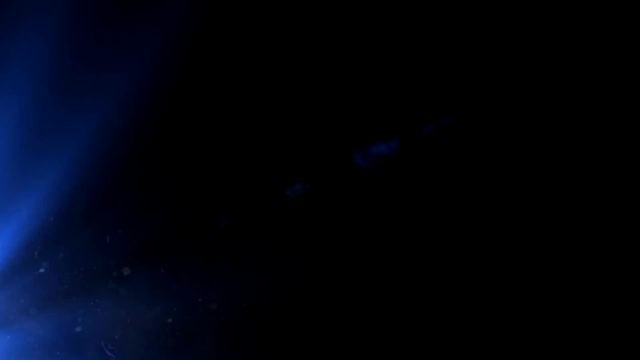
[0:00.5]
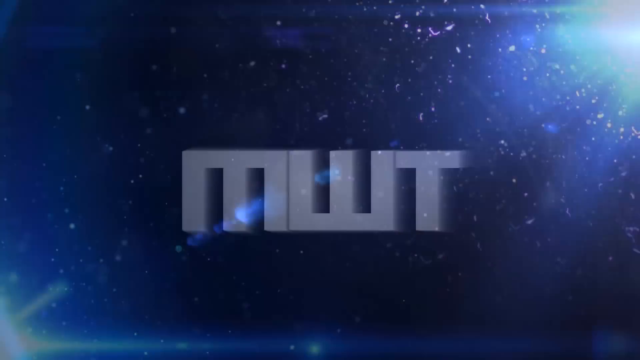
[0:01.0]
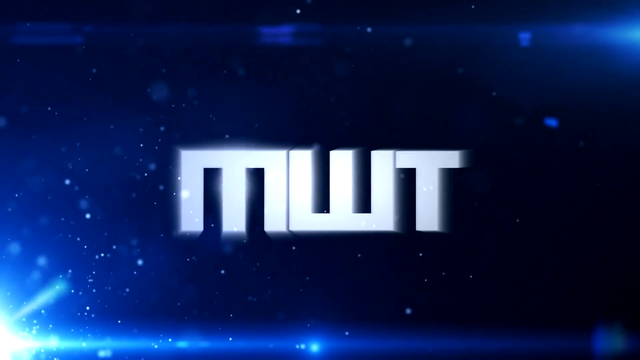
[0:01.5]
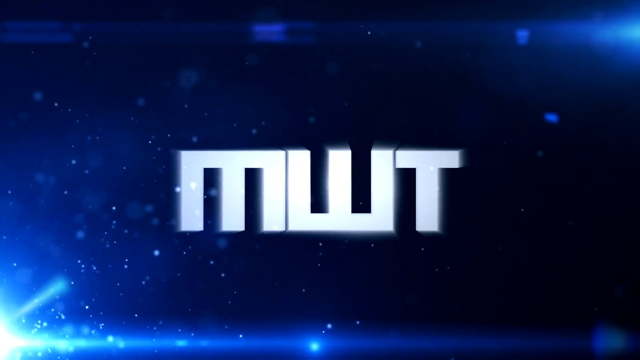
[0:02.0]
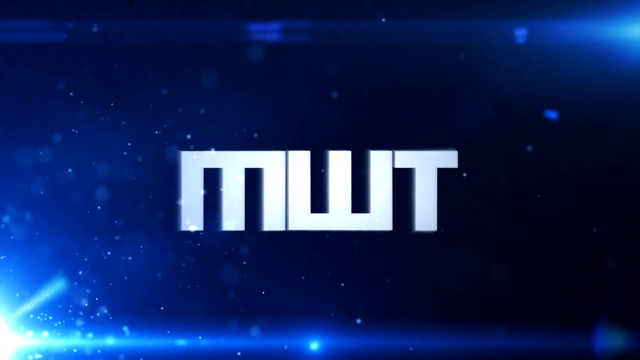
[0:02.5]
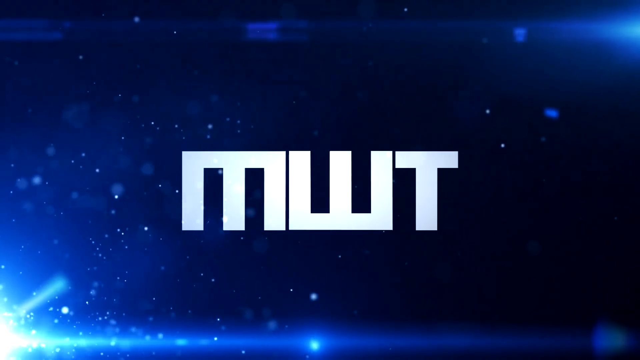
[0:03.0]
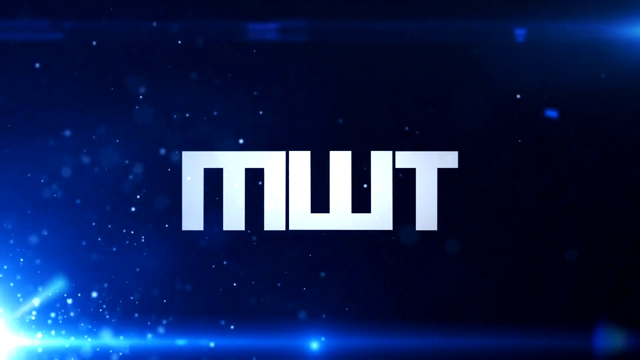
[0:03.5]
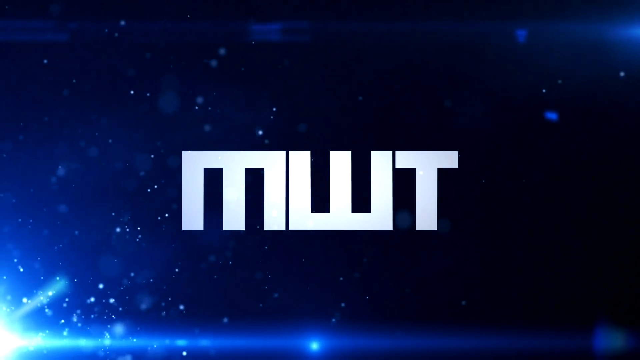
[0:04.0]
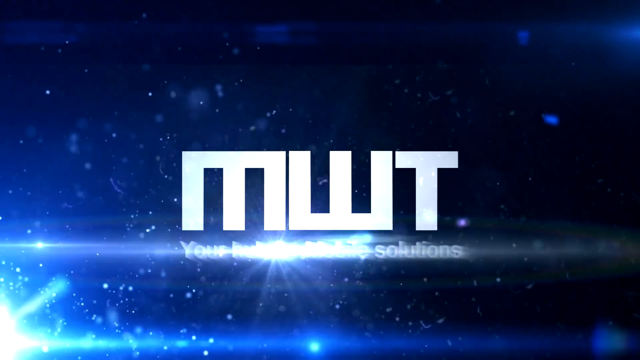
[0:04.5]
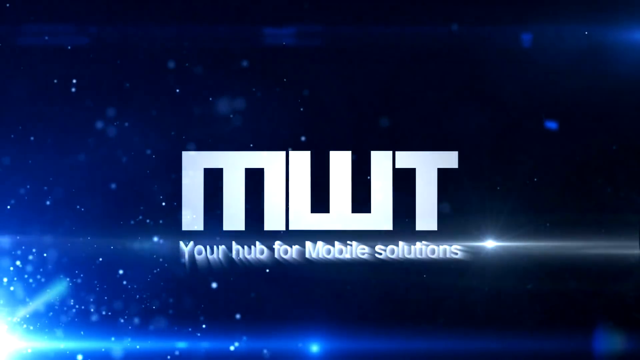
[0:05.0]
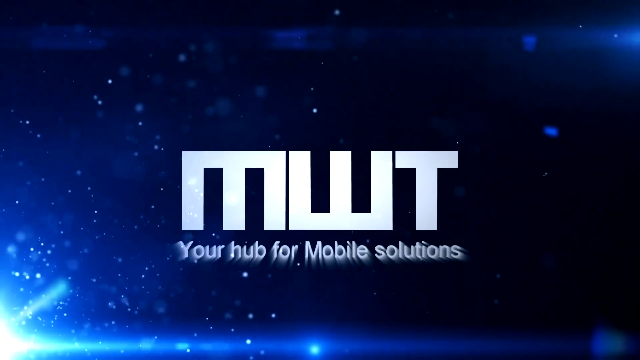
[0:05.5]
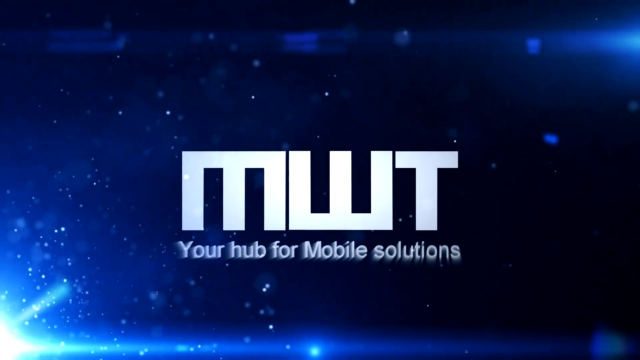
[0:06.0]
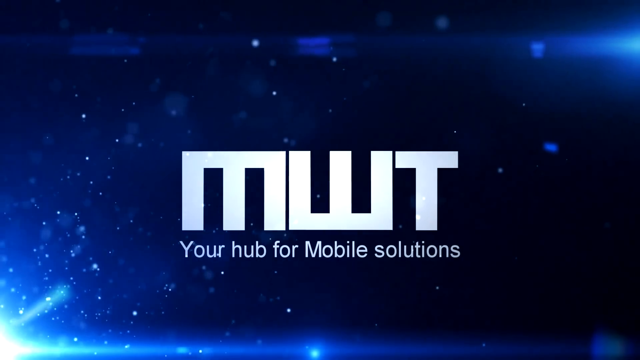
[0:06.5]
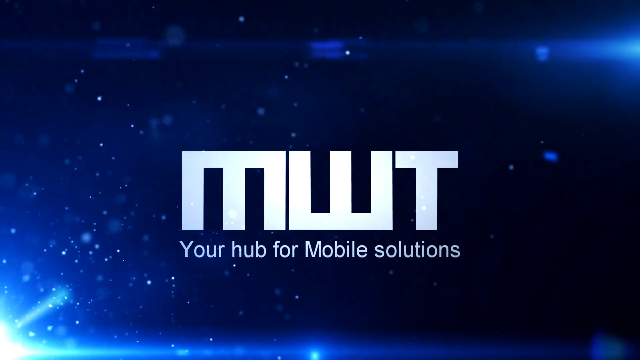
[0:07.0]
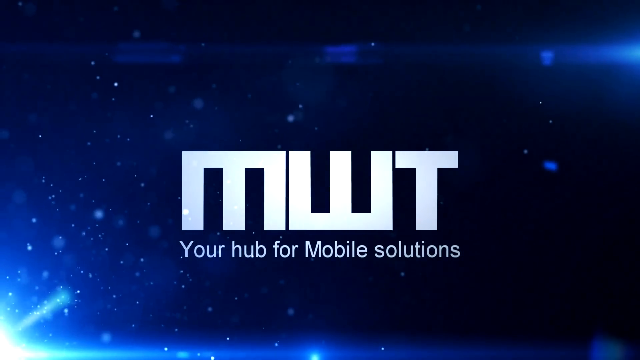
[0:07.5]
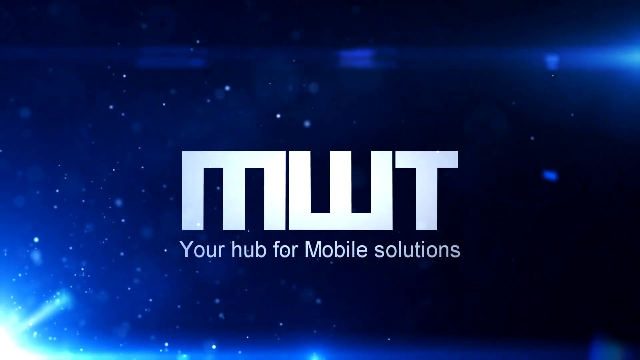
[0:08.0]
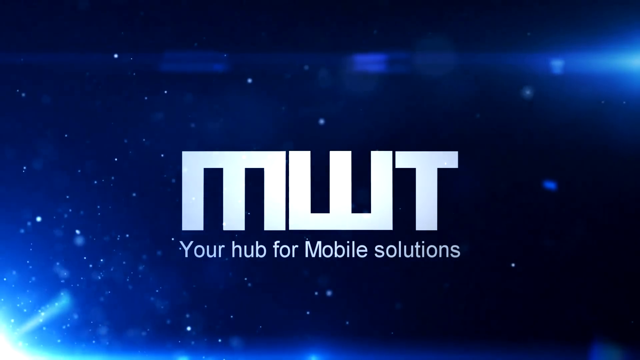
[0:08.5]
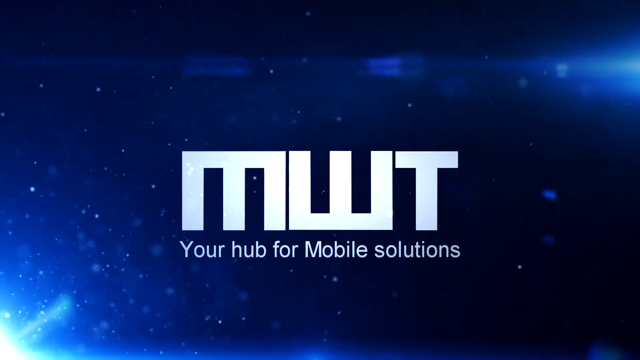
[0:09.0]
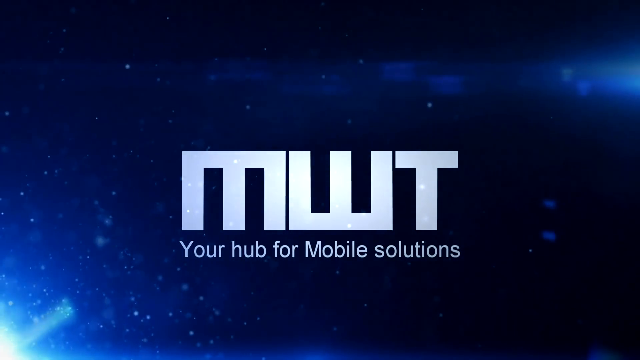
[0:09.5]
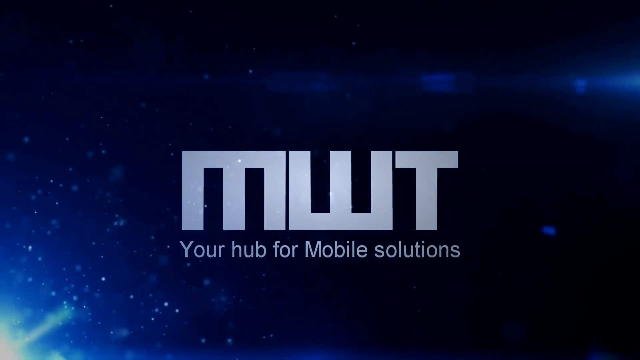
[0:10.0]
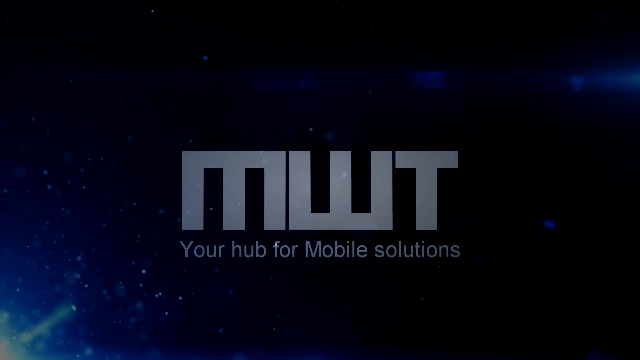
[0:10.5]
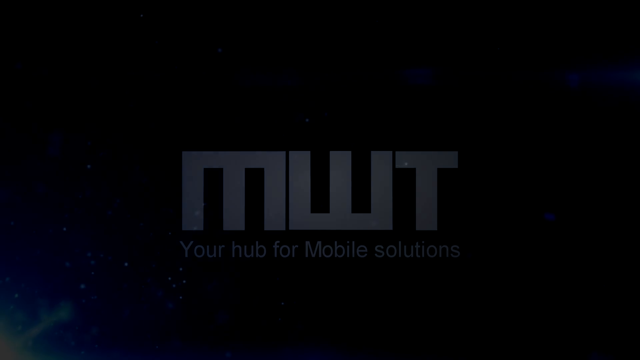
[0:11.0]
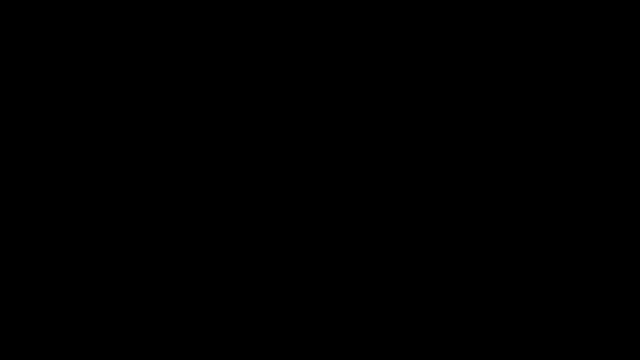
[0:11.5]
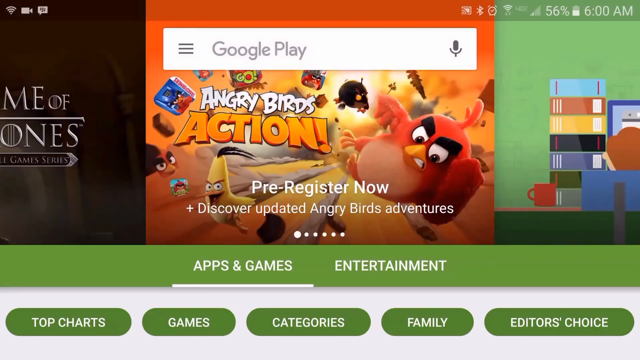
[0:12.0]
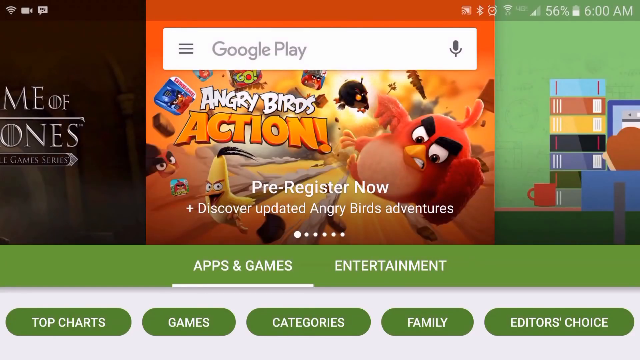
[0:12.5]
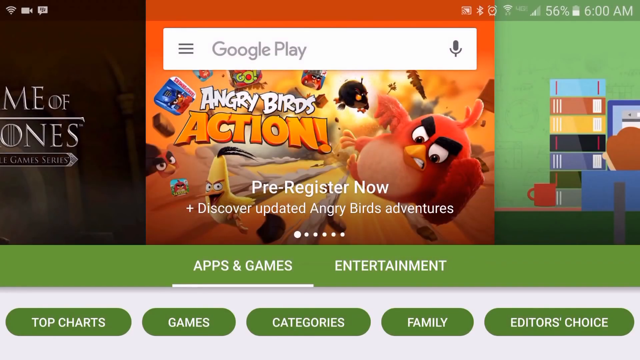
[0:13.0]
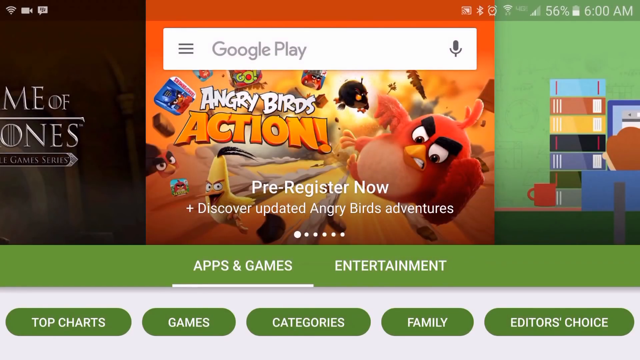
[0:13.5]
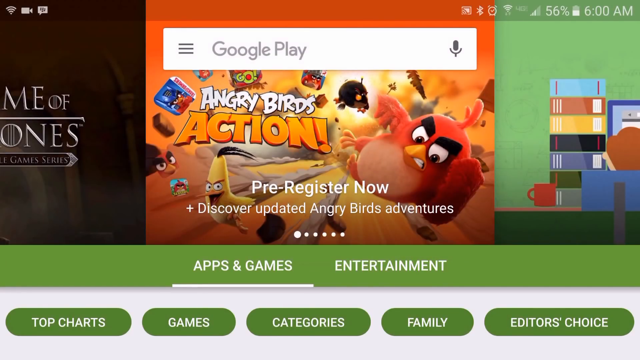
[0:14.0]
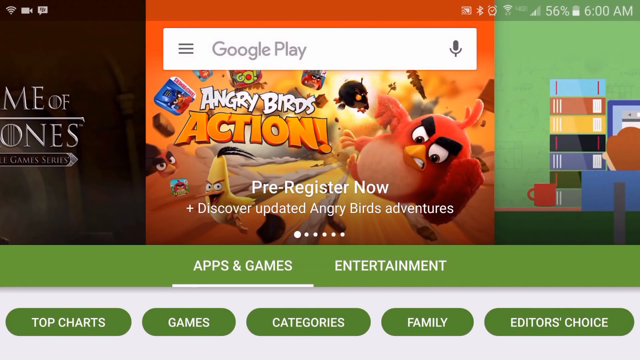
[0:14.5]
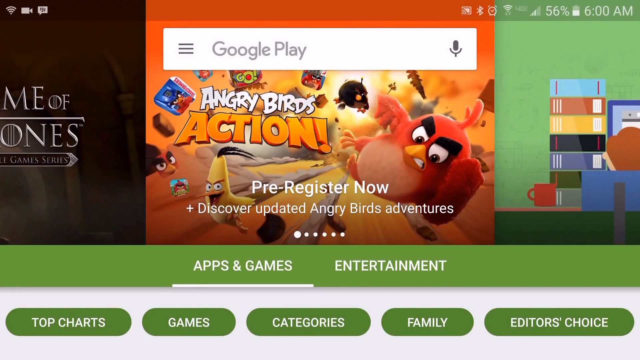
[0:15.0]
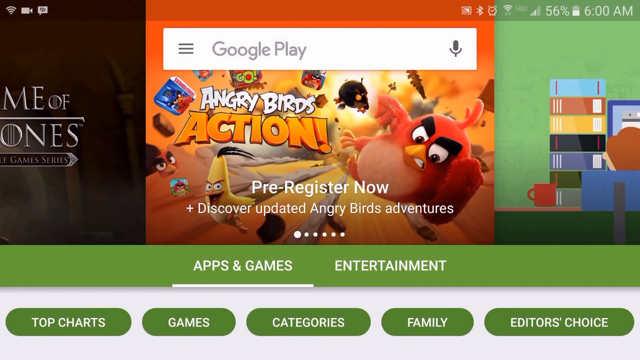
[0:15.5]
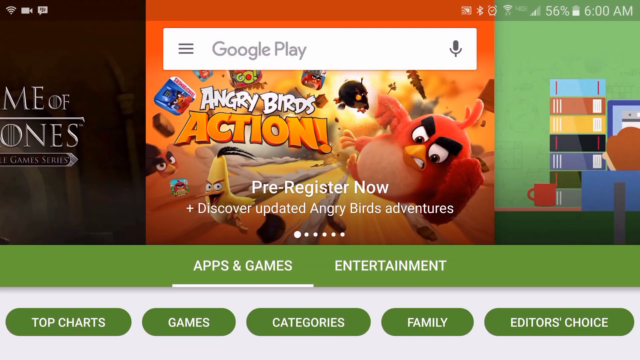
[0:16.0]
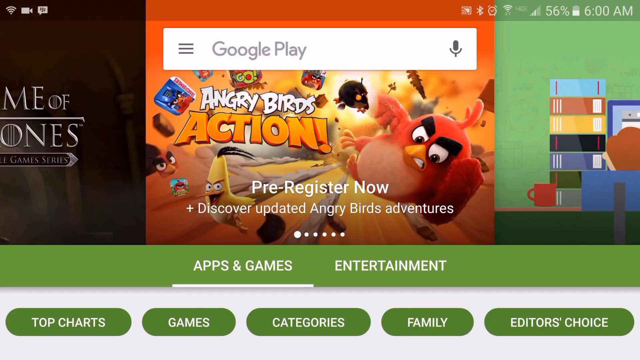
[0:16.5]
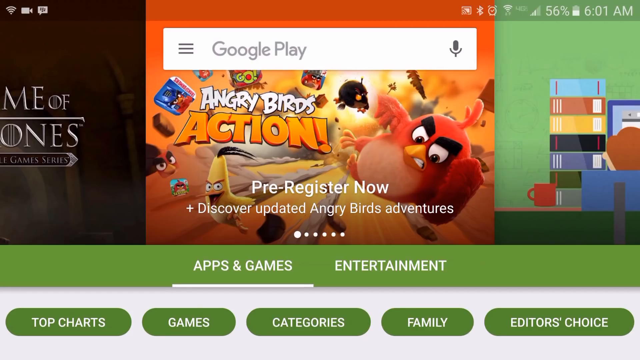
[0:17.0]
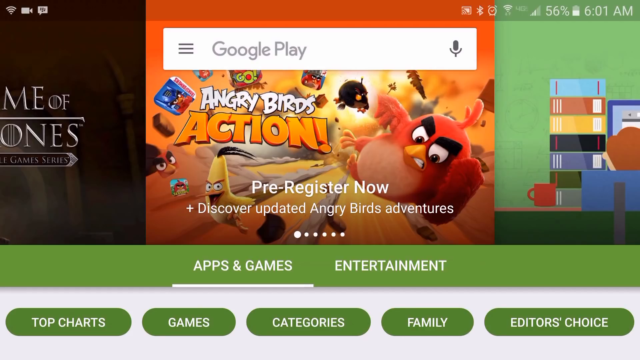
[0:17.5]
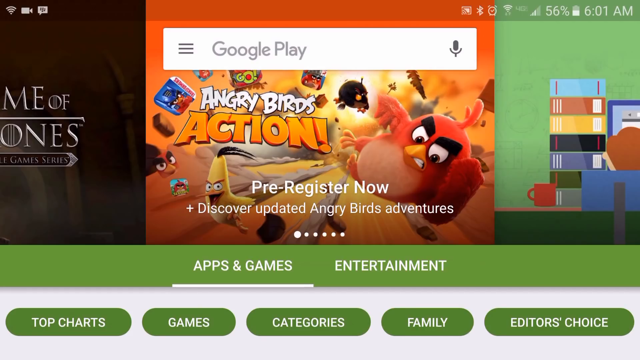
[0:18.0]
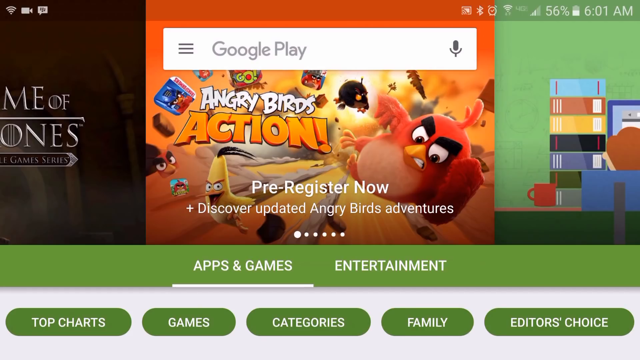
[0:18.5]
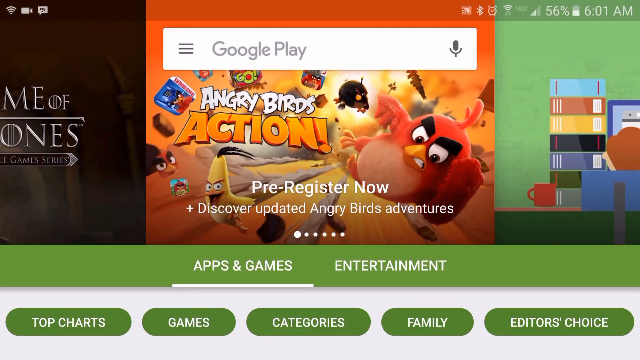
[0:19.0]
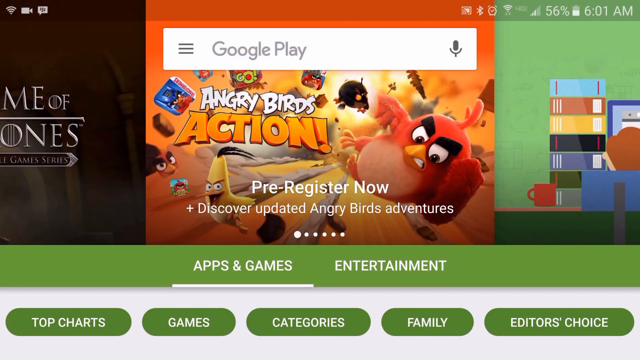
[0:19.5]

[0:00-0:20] The video opens on solid black for about a second, then a very bright light comes in from the lower left side of the screen, its beams cutting through the darkness. Scattered in the light are what could be stars or dust that start to form; as the light moves across the screen it disappears so fast that it is unclear whether they are stars or dust. The screen turns dark blue with what looks like dust particles floating all over, and "MWT" appears in large letters, followed by "your hub for mobile solutions". Light still glints up from the bottom, and another light kind of floats around the top. The screen then changes to a Google Play screen with a big Angry Birds "pre-register now" advertisement right in the center.